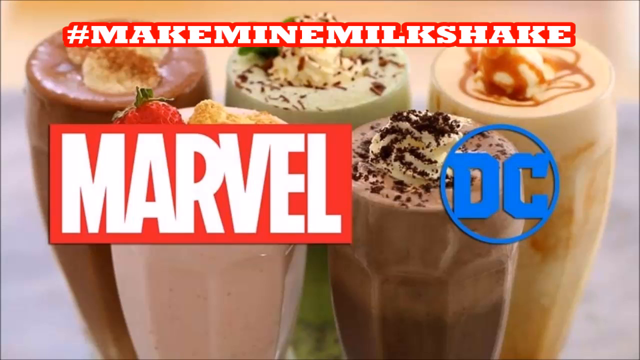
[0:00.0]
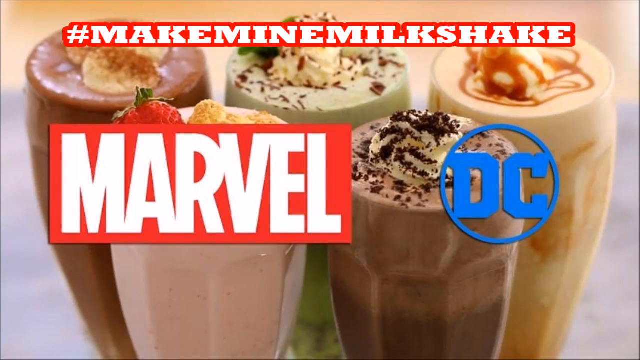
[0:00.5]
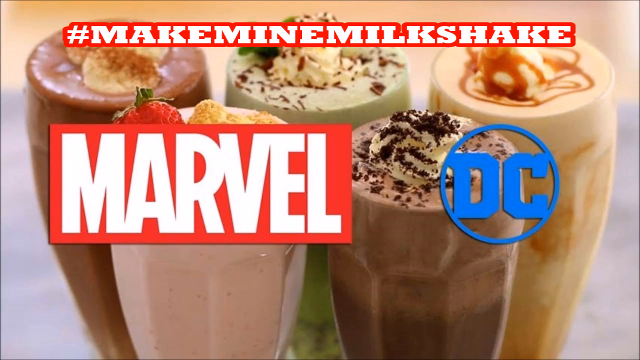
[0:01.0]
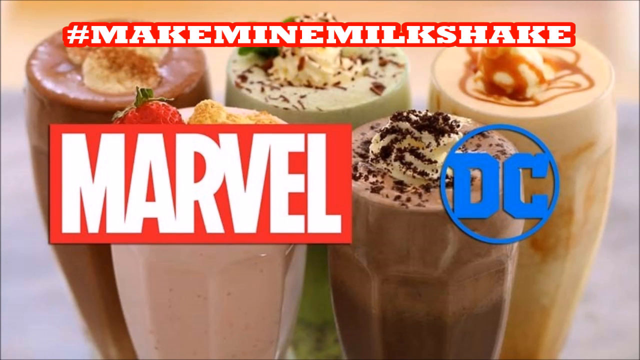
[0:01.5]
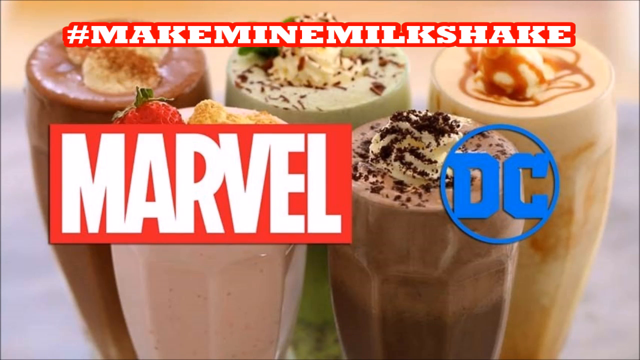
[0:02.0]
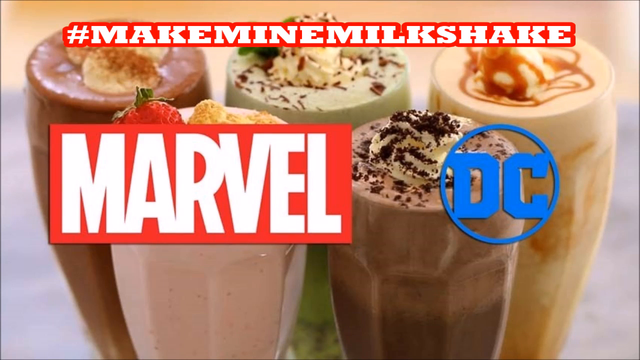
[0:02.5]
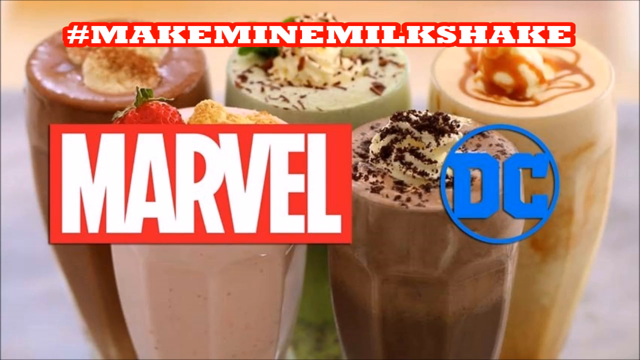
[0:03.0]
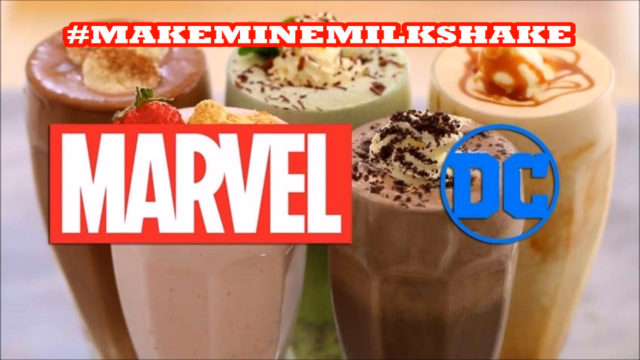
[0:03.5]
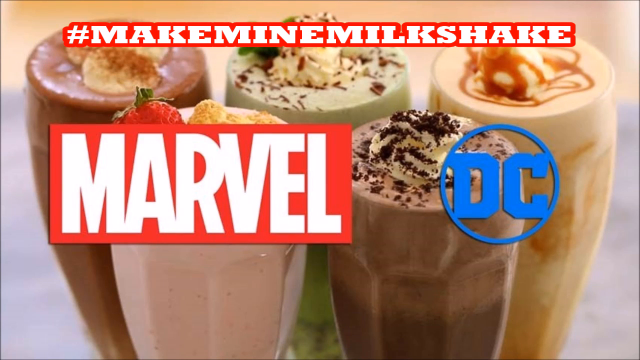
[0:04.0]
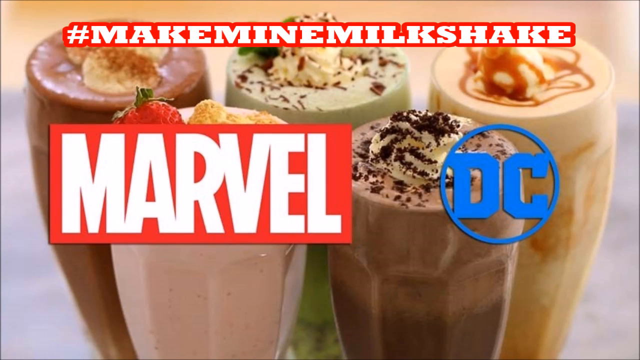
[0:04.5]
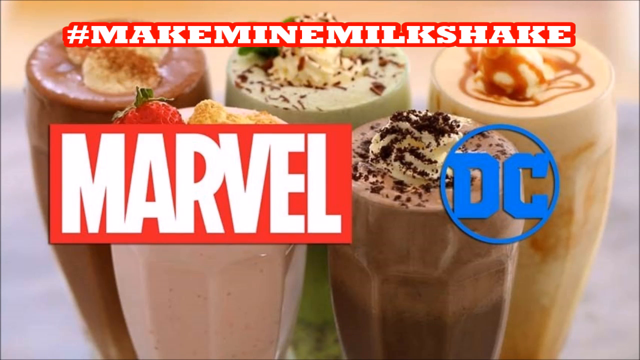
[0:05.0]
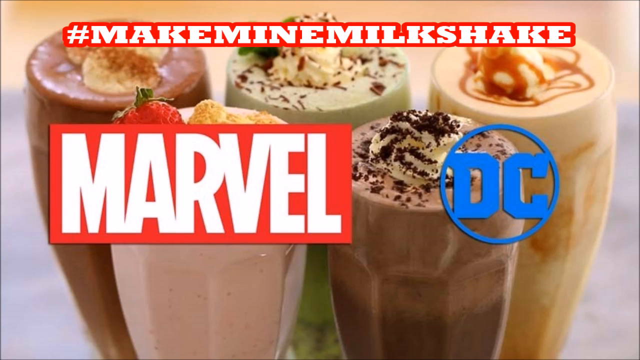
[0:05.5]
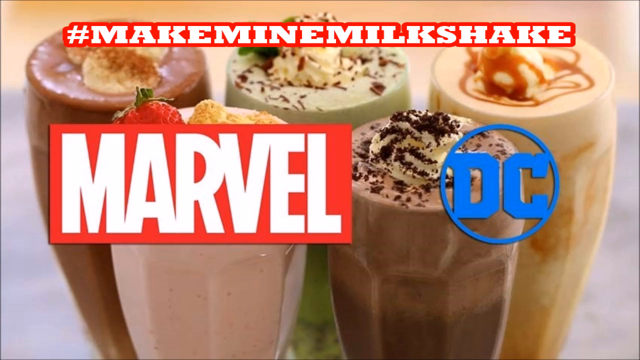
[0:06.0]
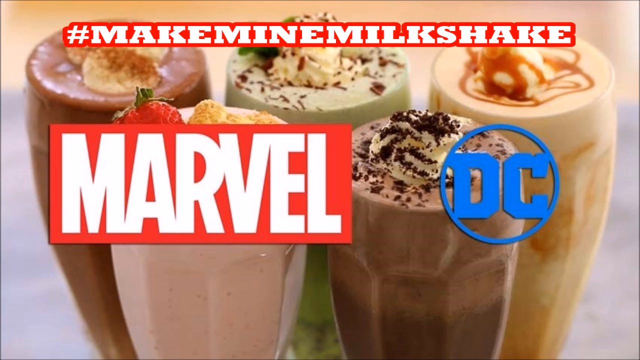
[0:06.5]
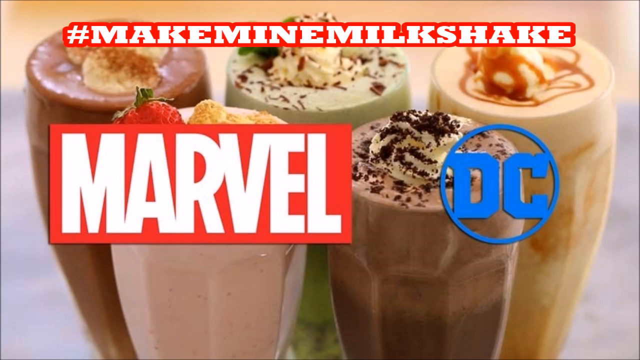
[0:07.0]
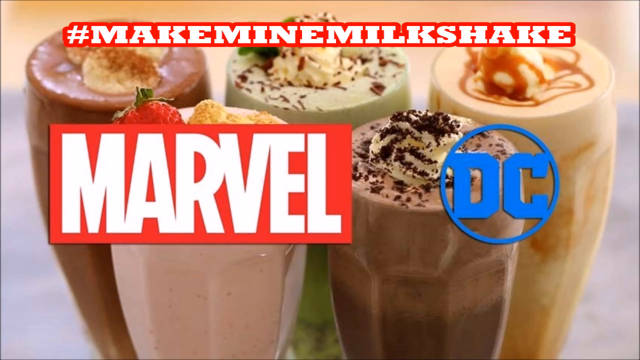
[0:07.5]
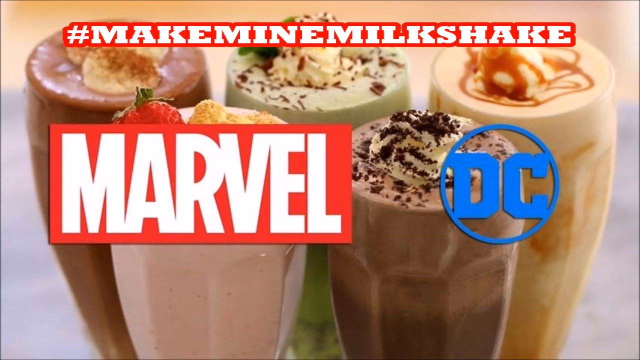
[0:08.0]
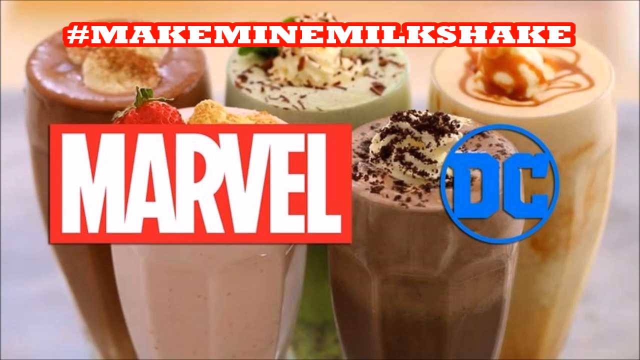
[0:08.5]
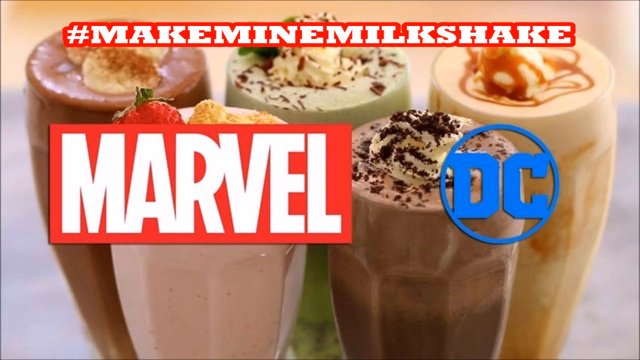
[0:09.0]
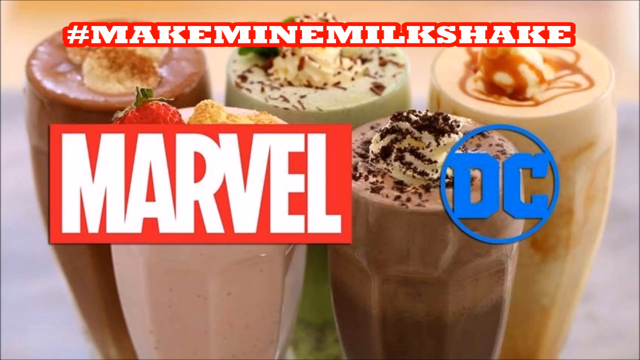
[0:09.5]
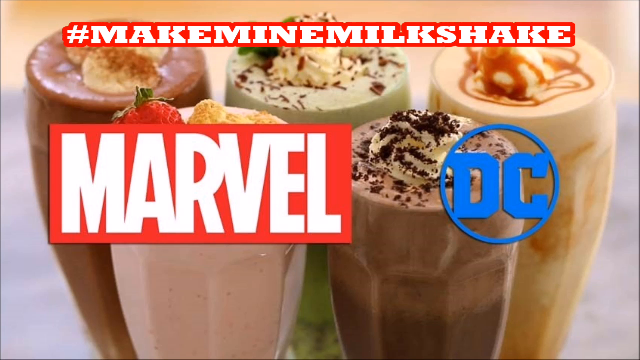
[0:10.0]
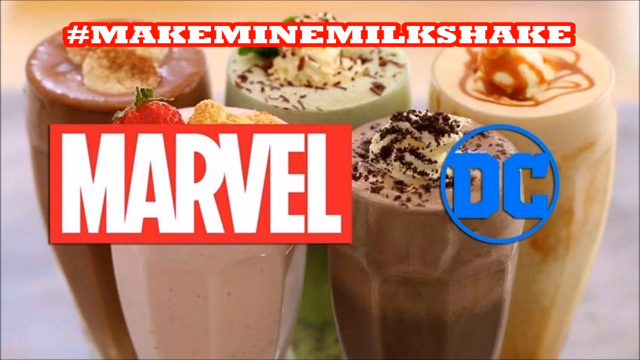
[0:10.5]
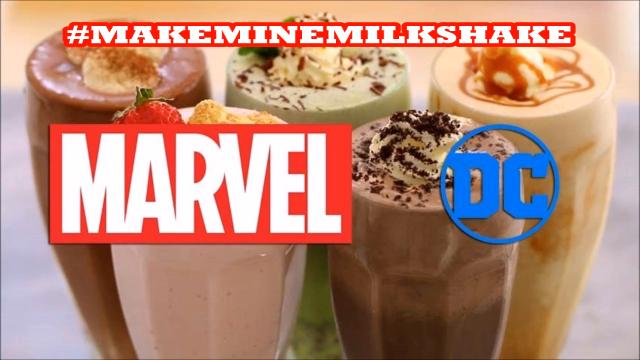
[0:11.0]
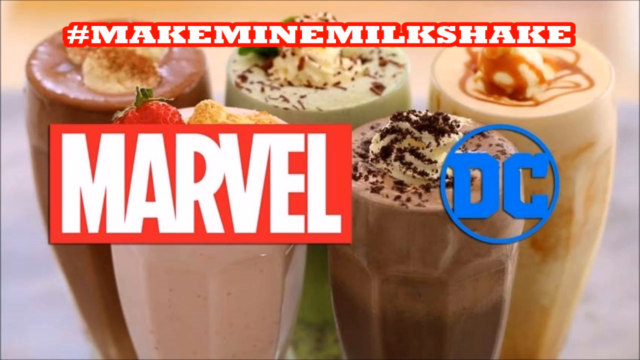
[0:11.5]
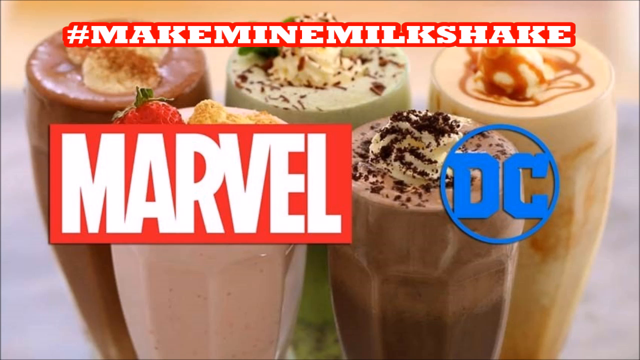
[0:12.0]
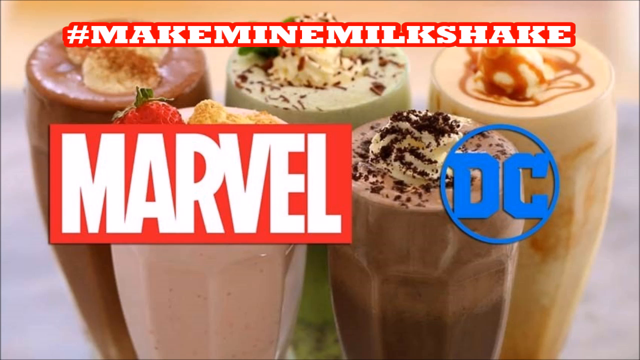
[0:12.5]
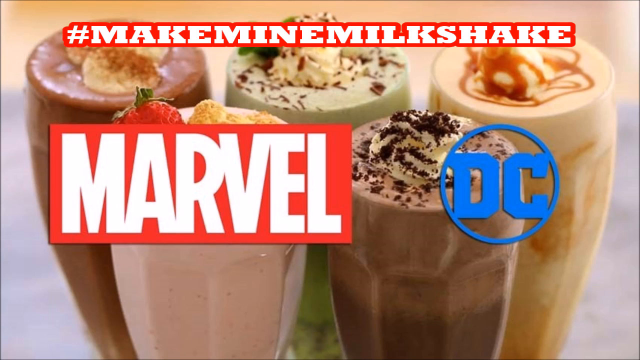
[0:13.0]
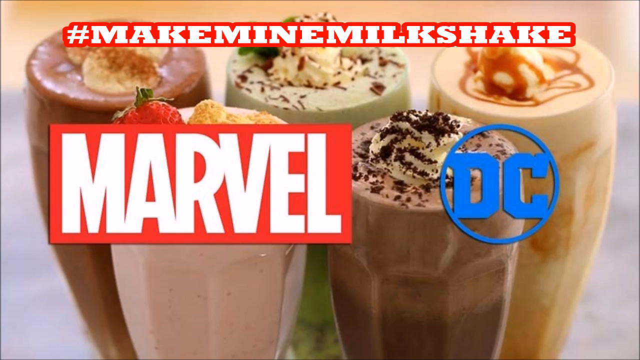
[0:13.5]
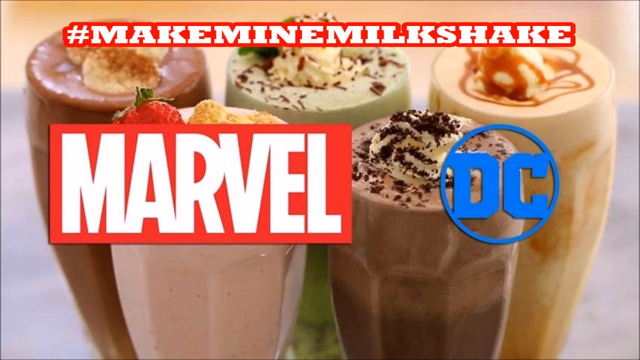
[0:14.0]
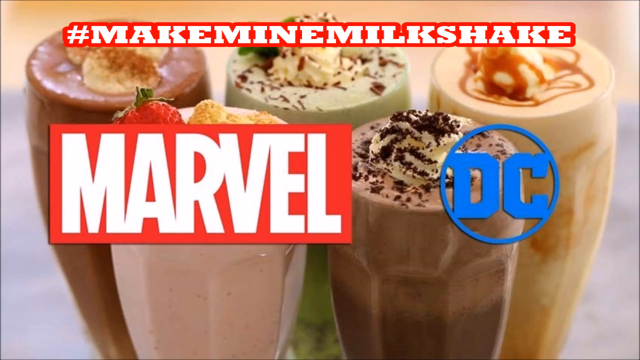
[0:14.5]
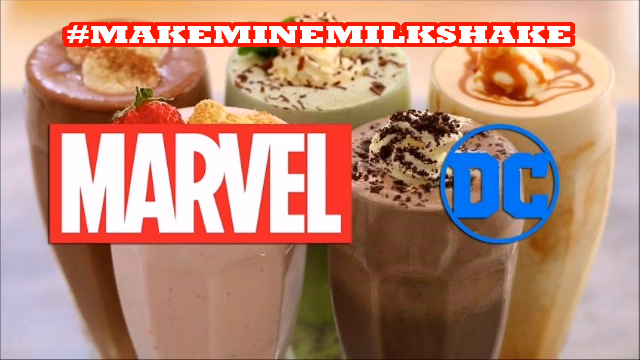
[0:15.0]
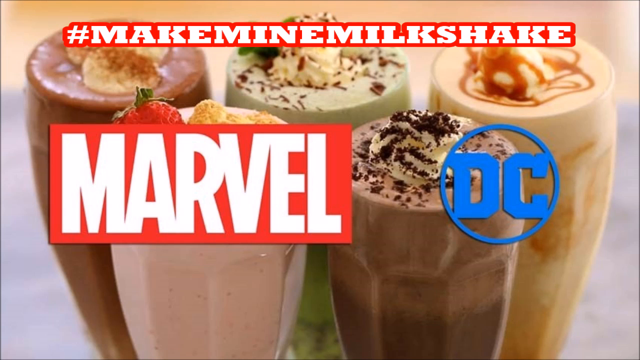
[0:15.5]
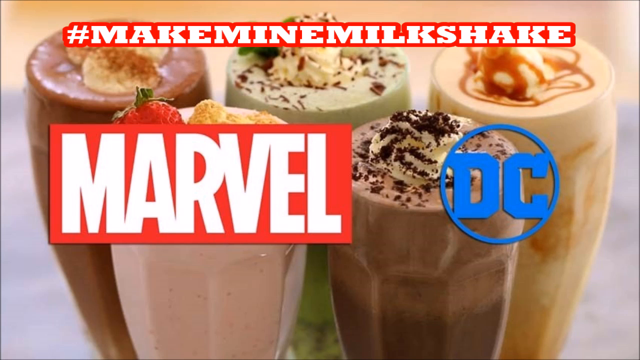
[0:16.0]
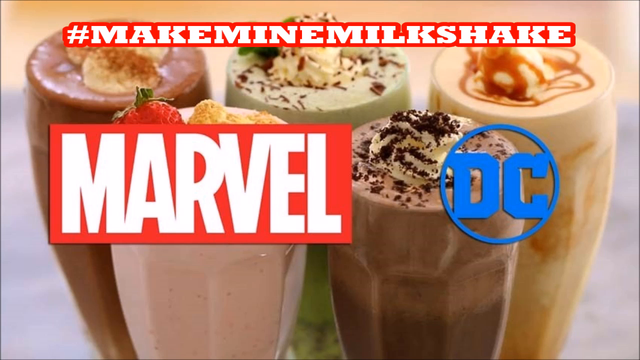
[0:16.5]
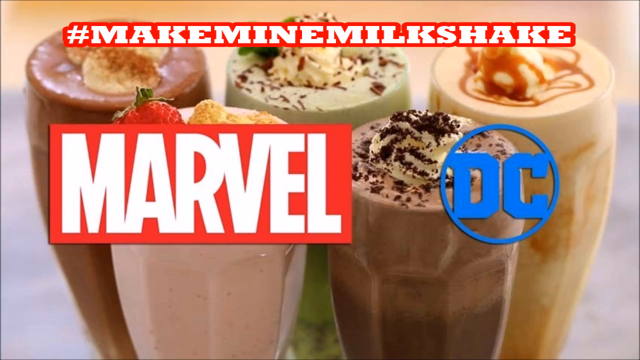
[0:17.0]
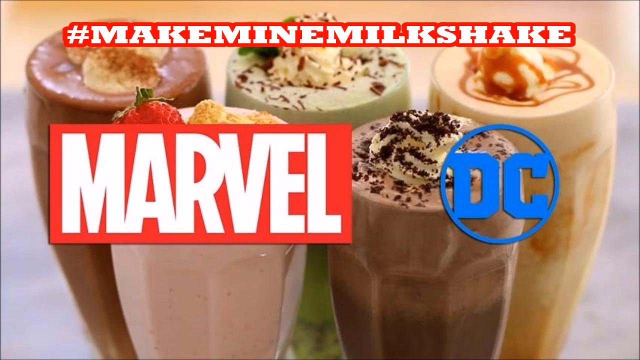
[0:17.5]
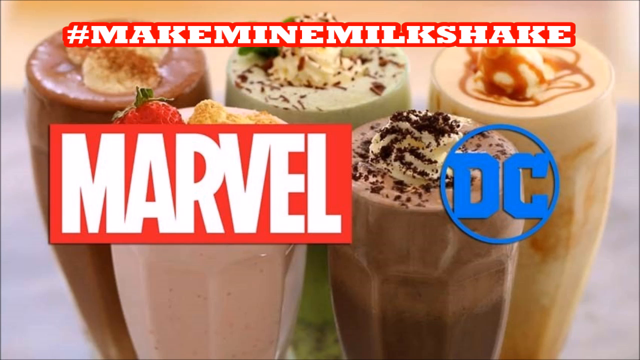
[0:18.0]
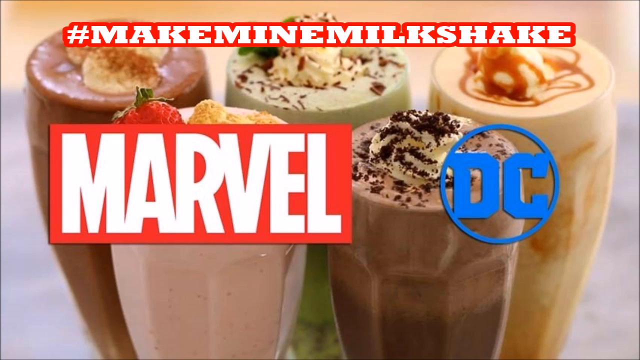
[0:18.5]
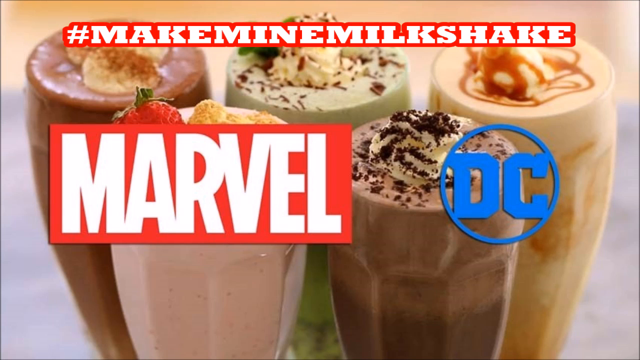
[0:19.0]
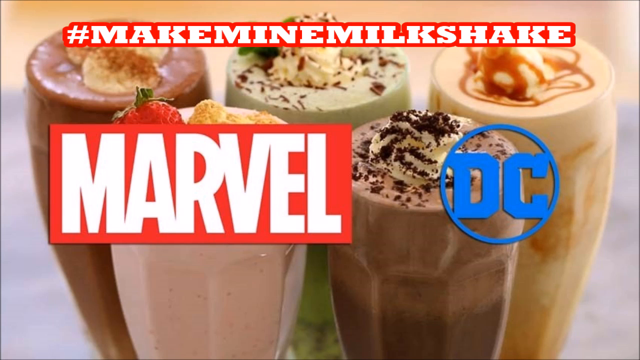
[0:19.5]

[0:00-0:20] The screen shows Marvel DC, with "#make my milkshake" written in white on a red background. Five glasses of milkshake are presented. On the left is a chocolate milkshake topped with whipped cream and grated chocolate. On the right is a strawberry milkshake topped with strawberries and shortcakes. On the far right is a banana milkshake, brown in color, topped with bananas and cinnamon. The middle glass is a mocha milkshake topped with whipped cream, chocolate chips and mint leaves. The last one is a caramel milkshake topped with whipped cream and caramel sauce. The glasses are filled with milkshake right to the top.